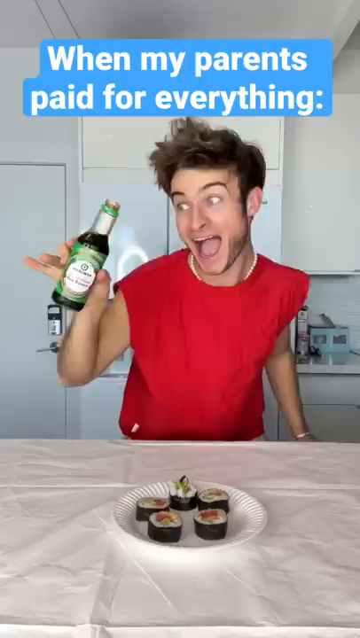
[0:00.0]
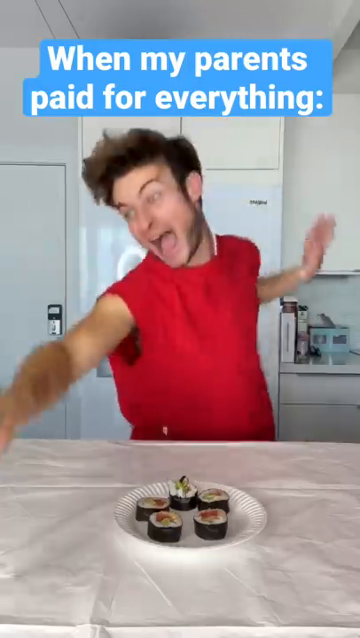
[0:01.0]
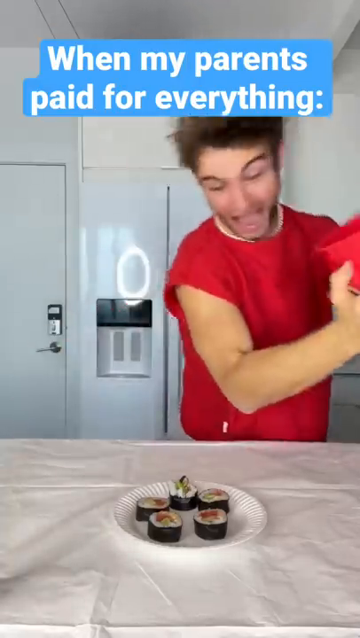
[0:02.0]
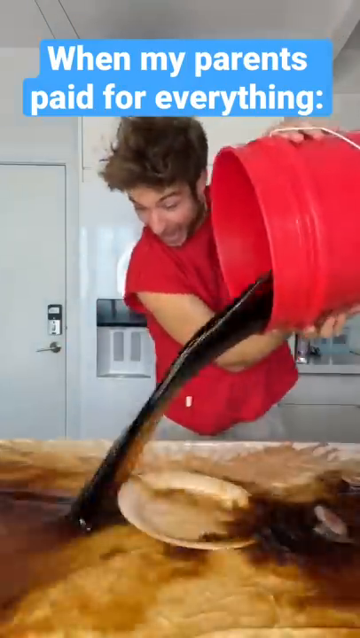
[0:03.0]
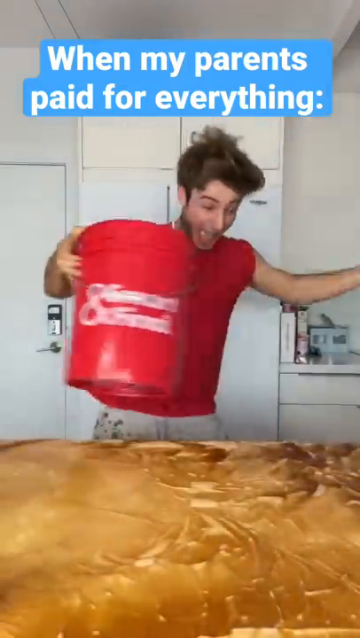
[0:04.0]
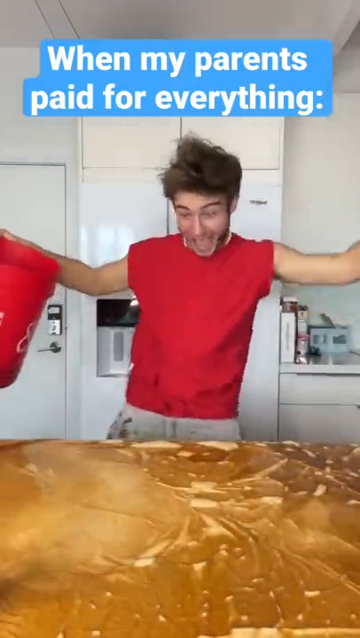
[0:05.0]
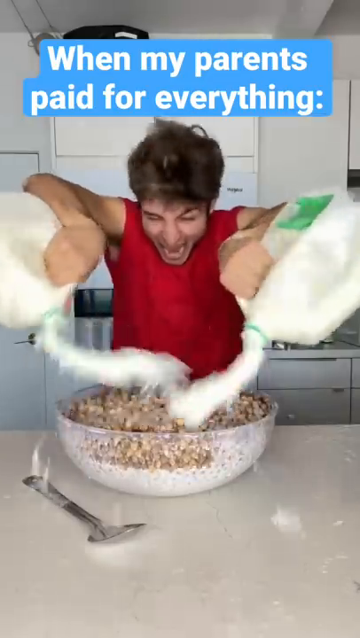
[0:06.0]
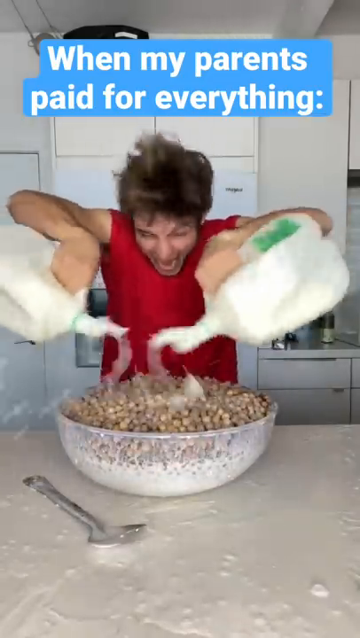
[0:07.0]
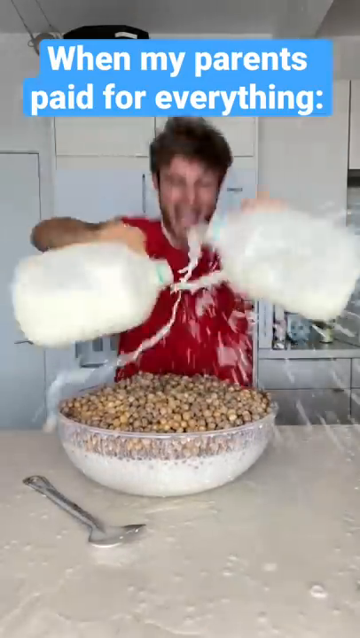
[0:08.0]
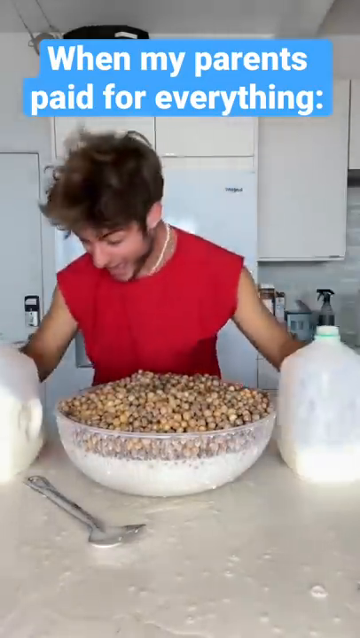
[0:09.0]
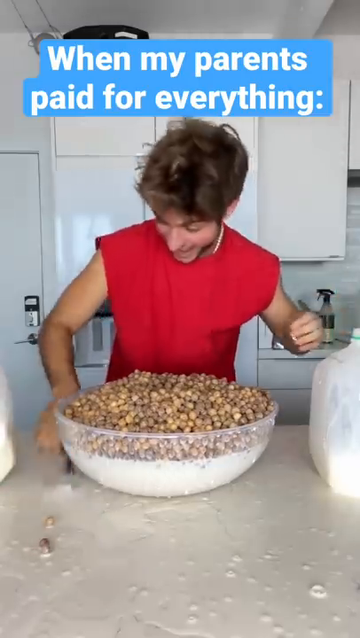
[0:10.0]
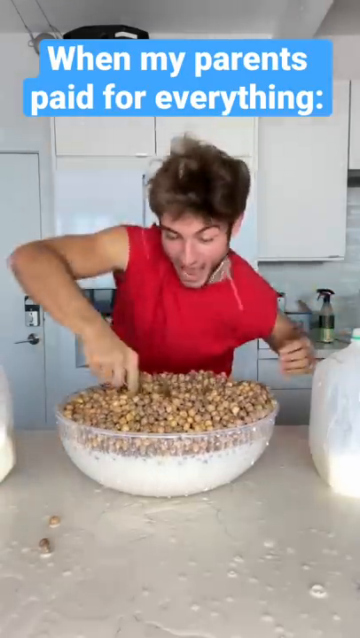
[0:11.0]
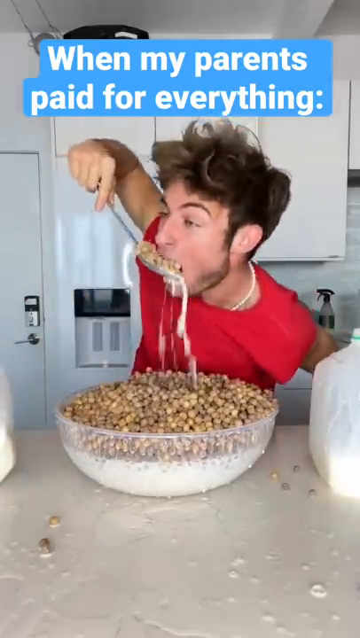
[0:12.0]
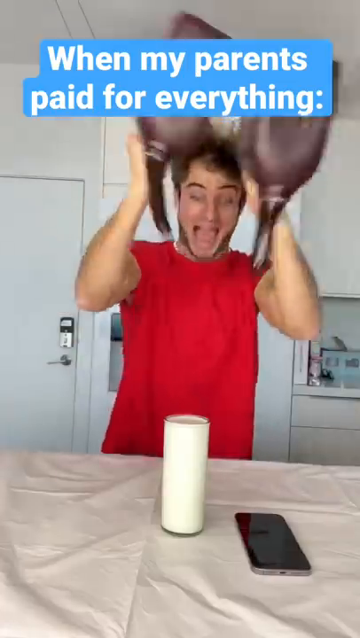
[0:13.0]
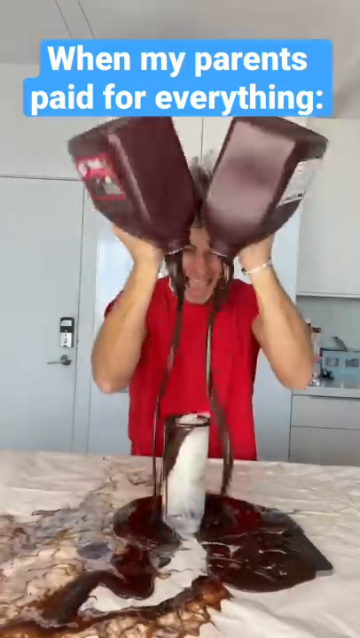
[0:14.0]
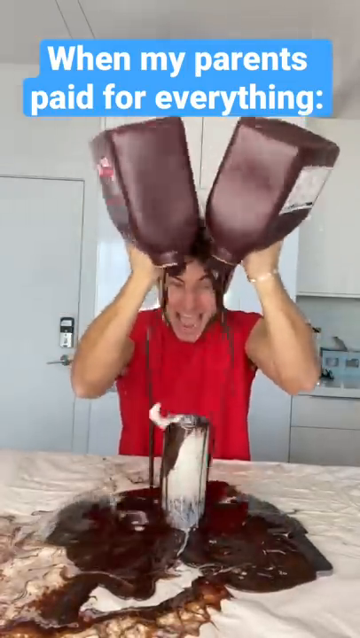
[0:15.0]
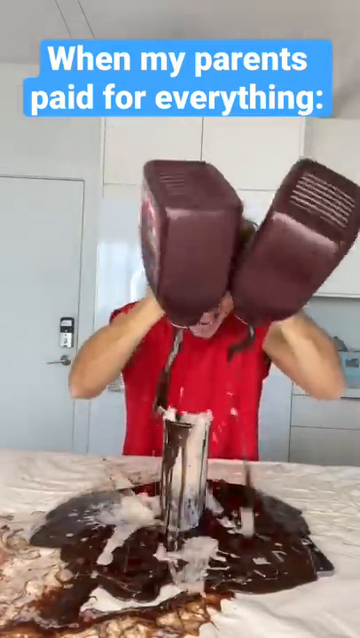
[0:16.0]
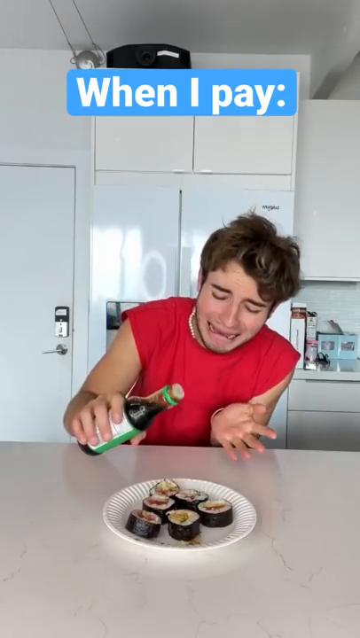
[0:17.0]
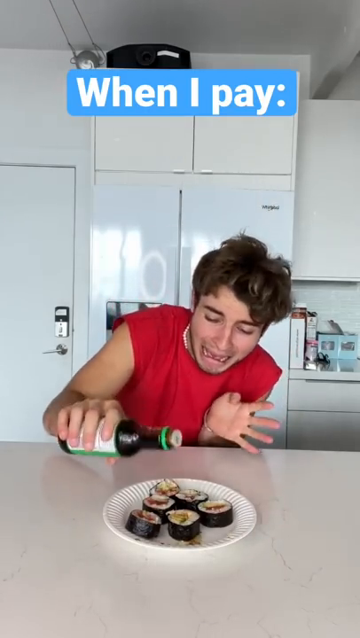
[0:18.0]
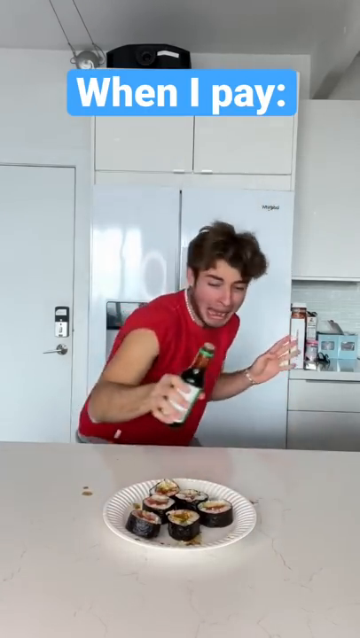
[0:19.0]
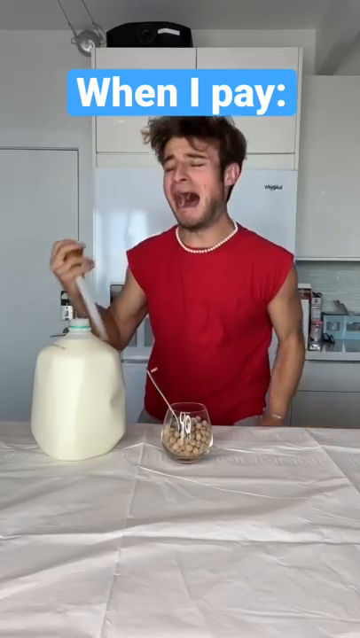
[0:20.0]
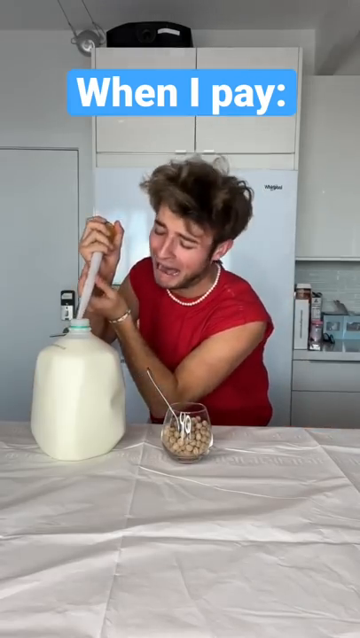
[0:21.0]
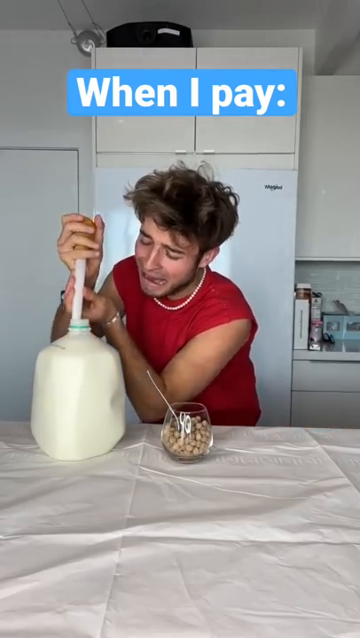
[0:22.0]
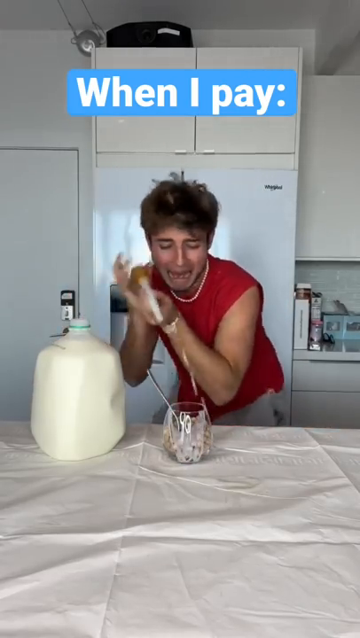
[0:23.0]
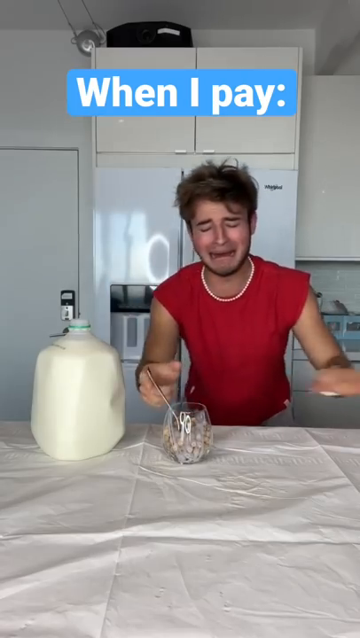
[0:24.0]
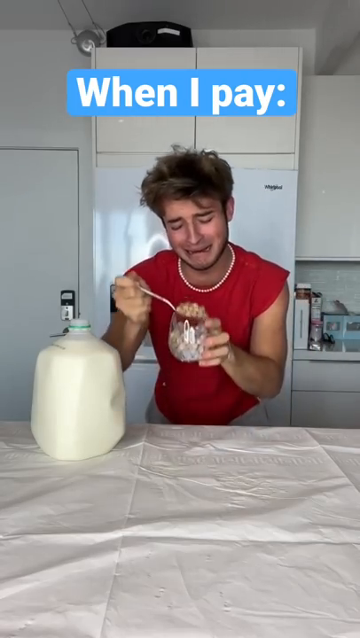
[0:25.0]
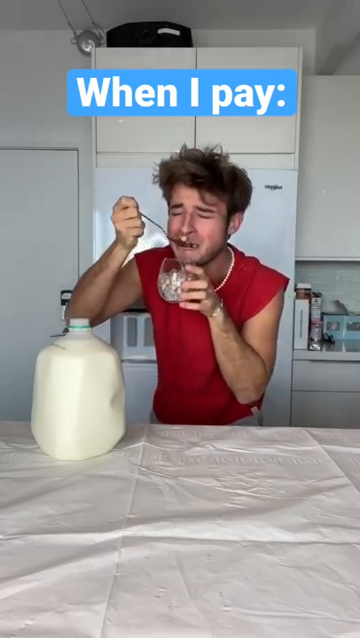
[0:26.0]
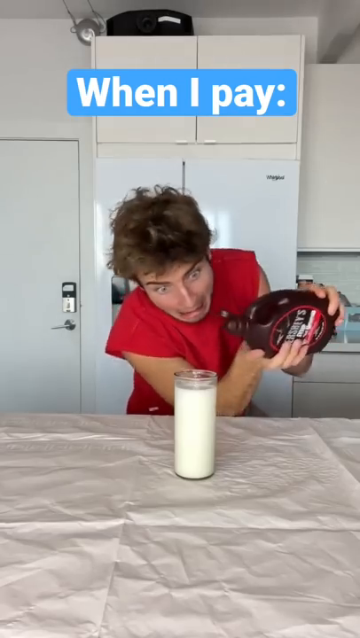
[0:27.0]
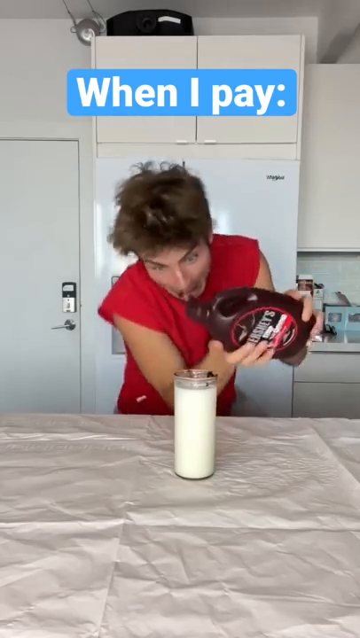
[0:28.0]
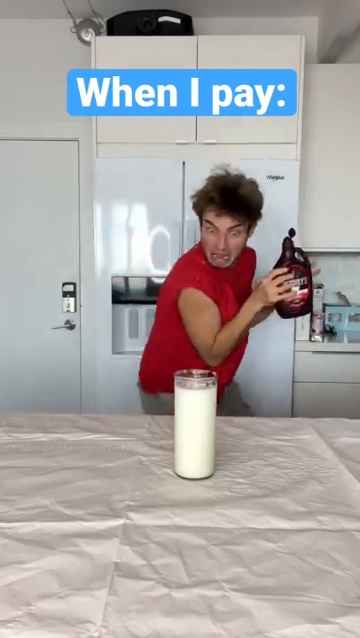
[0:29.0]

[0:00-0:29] The video opens with a caption that begins "will my parents". A guy in a sleeveless red shirt pours a large amount of chocolate milk into a giant cup, being very excessive and dramatic about it as it spills everywhere. It then cuts to him pouring cereal into a giant bowl, filling the entire bowl with milk, and digging into it with a giant spoon. Next a caption says "when I pay." Now he is very careful, pouring the chocolate into the milk one drop at a time, and pouring one tiny drop of soy sauce onto sushi. He is standing in an all-white kitchen. In this part he seems kind of scared and jumps back, and he looks like he is fake crying and upset. It is a comedy video contrasting his messy excess with his carefulness when he pays.